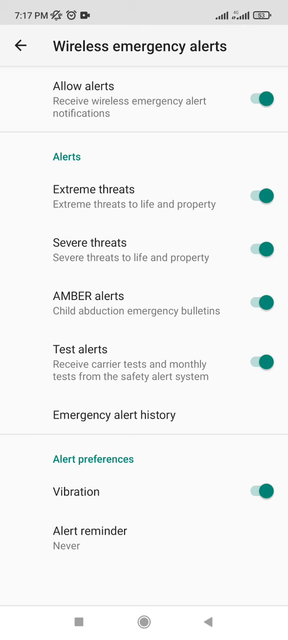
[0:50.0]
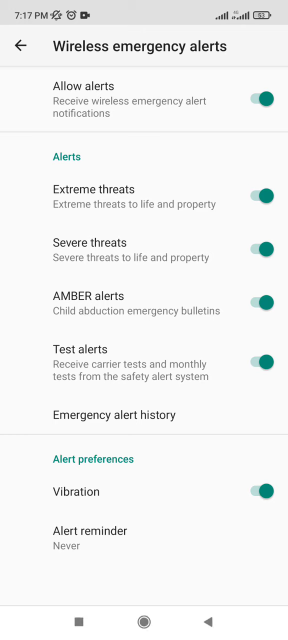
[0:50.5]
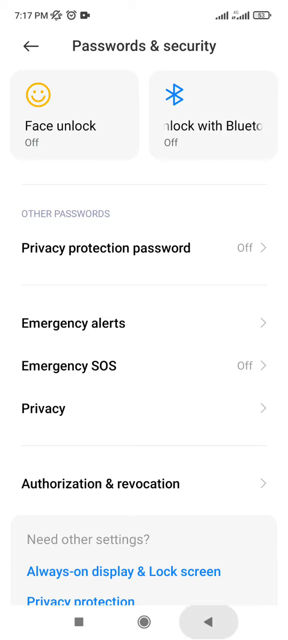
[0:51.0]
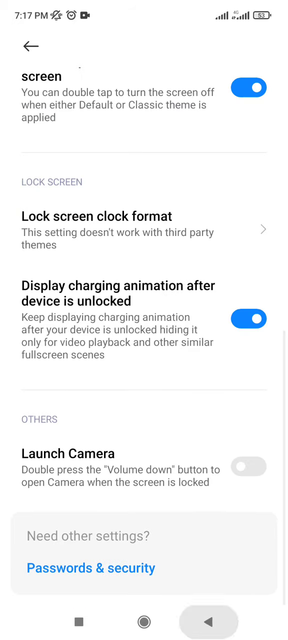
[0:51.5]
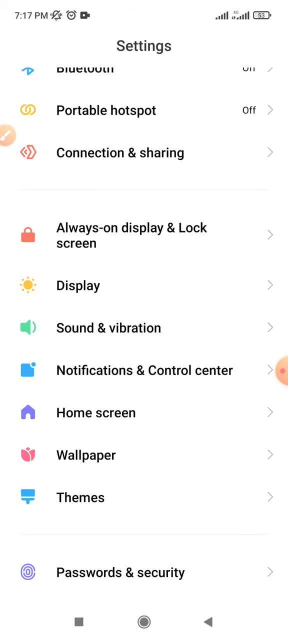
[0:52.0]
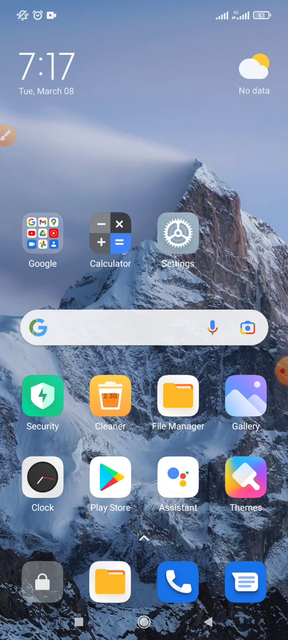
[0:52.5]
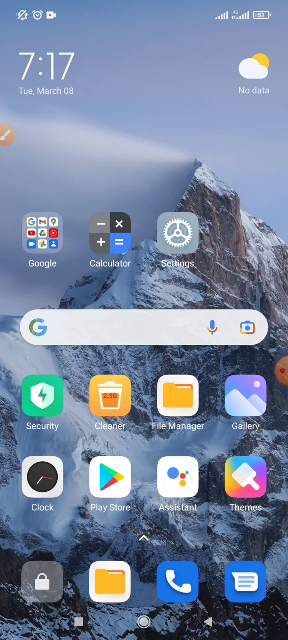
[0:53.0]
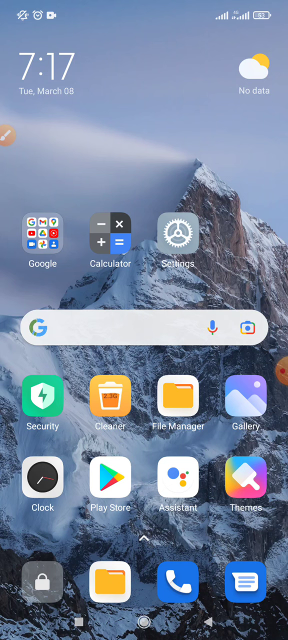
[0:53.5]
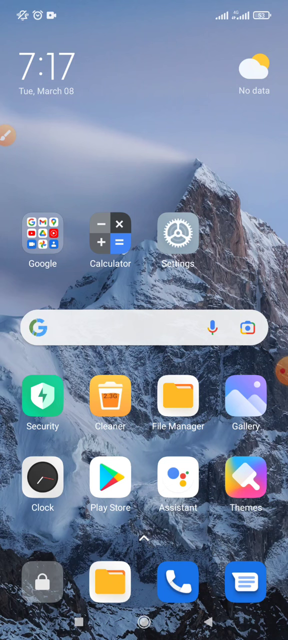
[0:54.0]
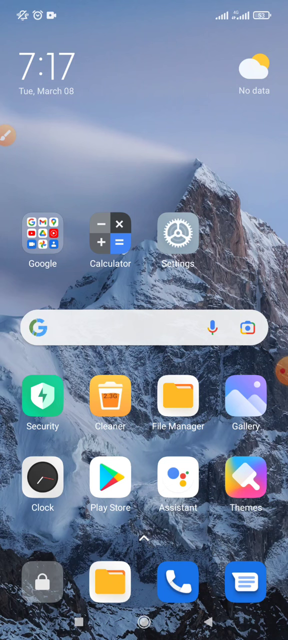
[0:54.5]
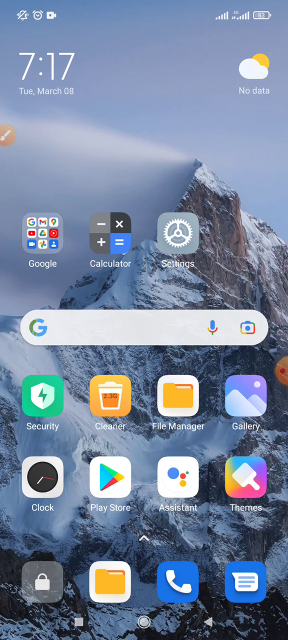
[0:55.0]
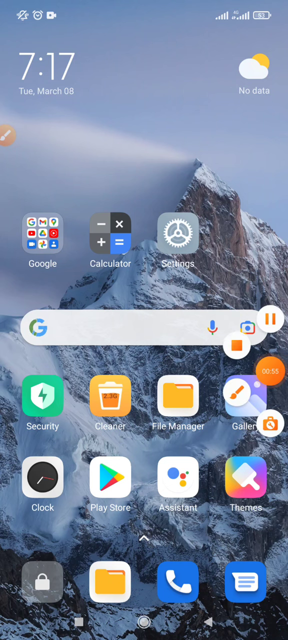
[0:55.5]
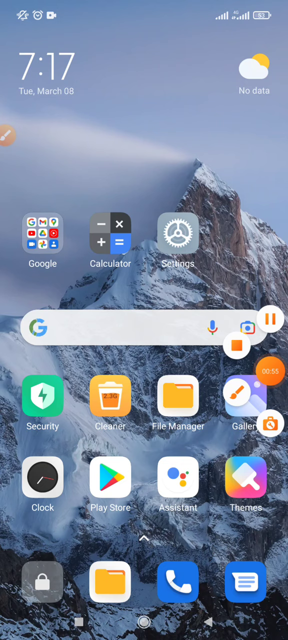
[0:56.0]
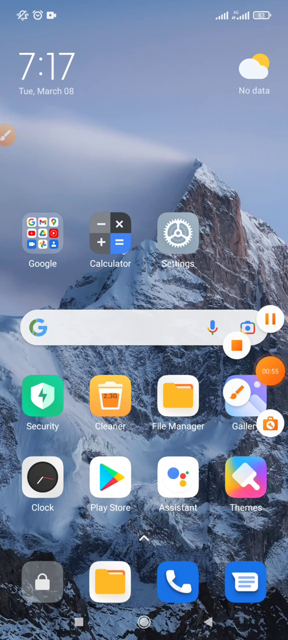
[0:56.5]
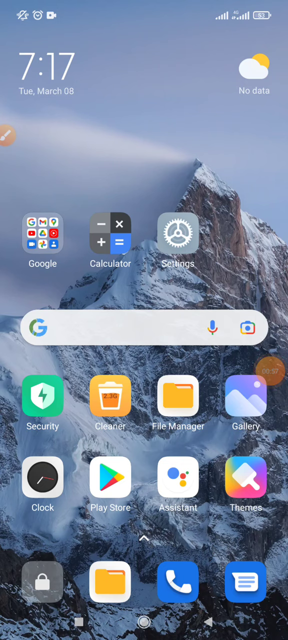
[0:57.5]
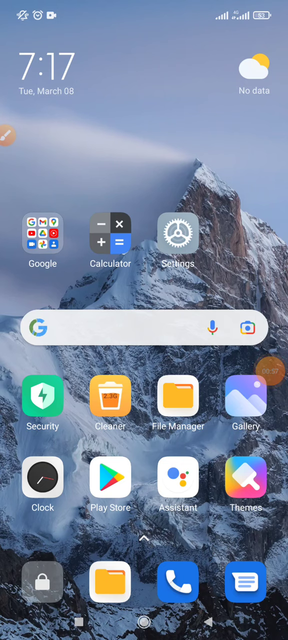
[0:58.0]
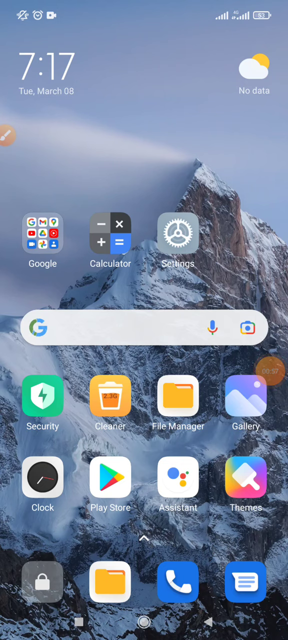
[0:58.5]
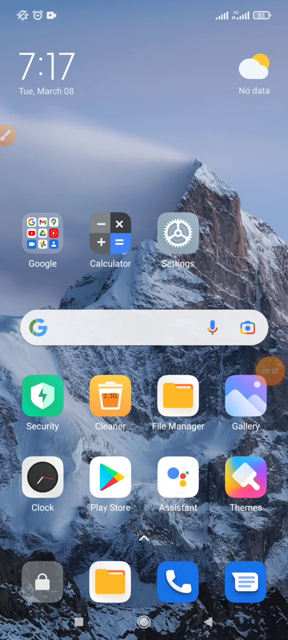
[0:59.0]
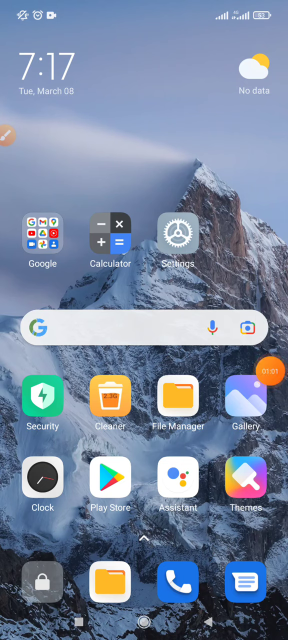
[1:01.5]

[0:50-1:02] The settings page is shown at first, and then the view quickly switches to the home screen, where a small orange circle with a timer on it appears to be tapped. This seems to be an accessibility option. It brings up four other icons, which look like a pause, a stop, a pen and a briefcase. The home screen wallpaper is a snow-covered mountain with very thin clouds behind it, and the time is displayed in the top right-hand corner.